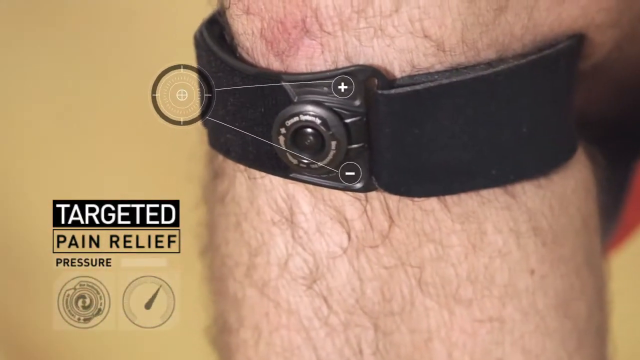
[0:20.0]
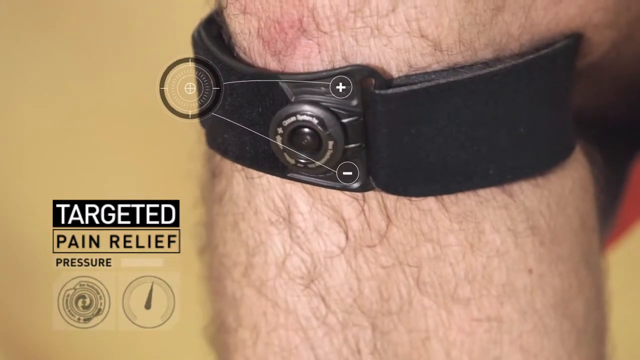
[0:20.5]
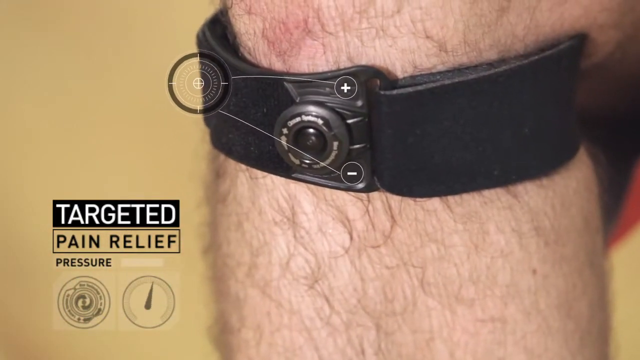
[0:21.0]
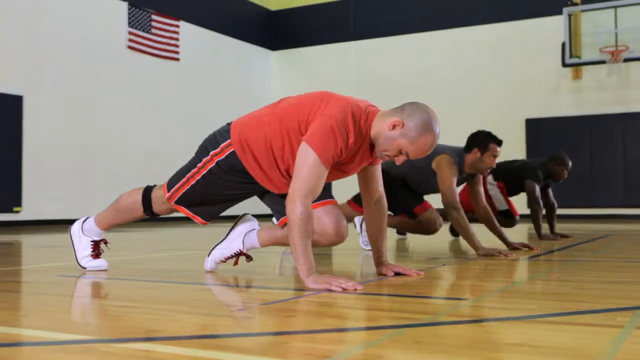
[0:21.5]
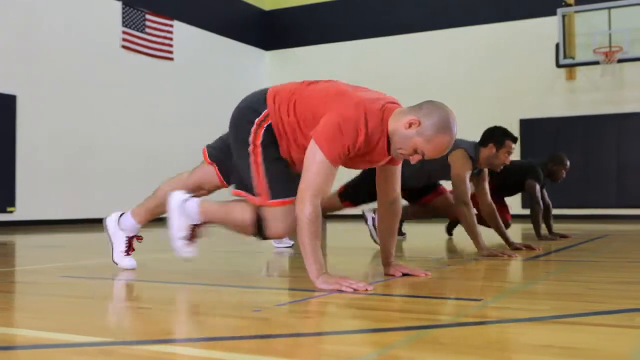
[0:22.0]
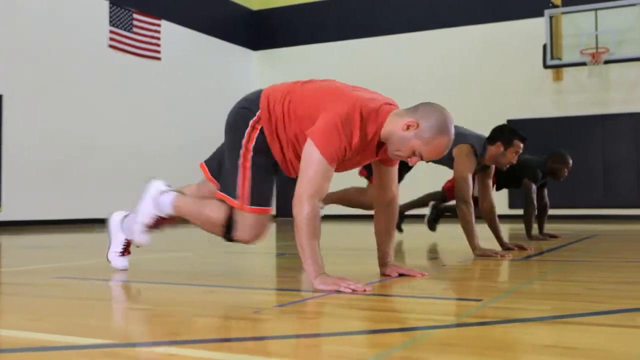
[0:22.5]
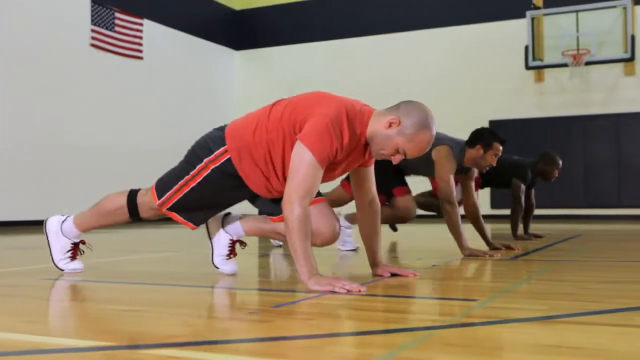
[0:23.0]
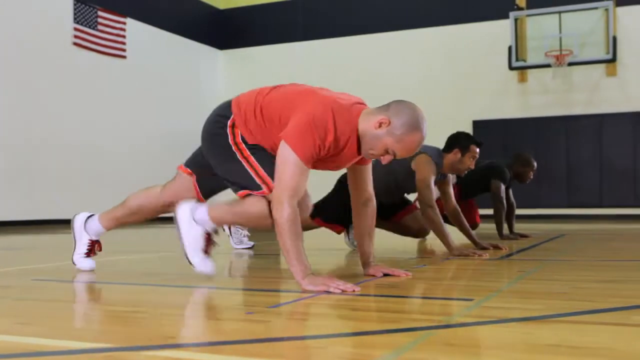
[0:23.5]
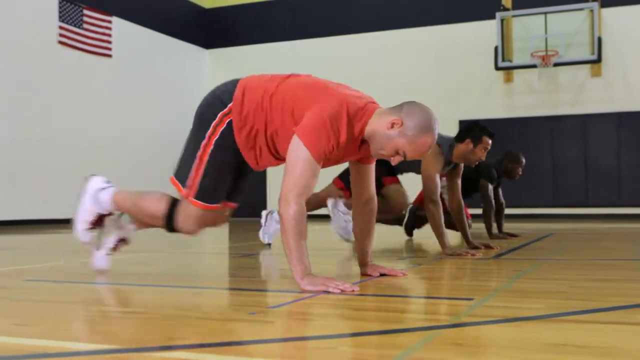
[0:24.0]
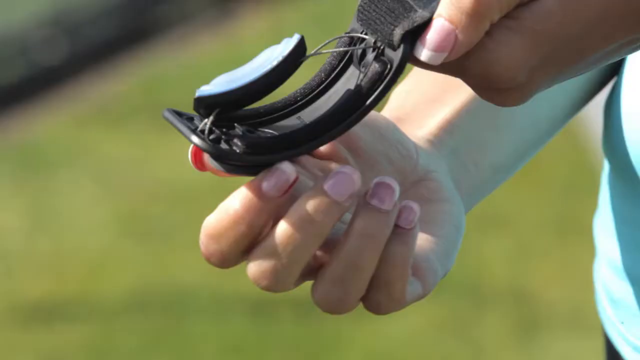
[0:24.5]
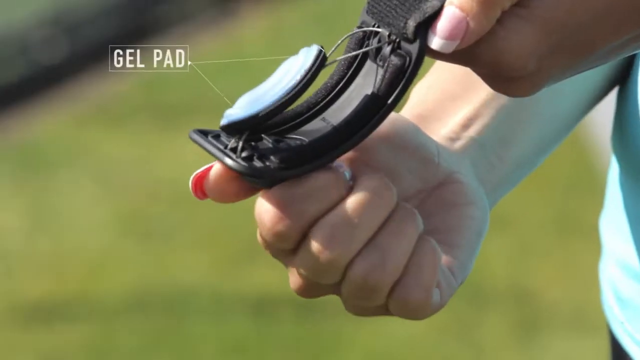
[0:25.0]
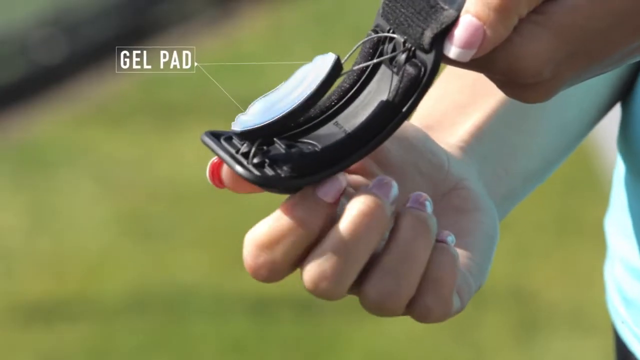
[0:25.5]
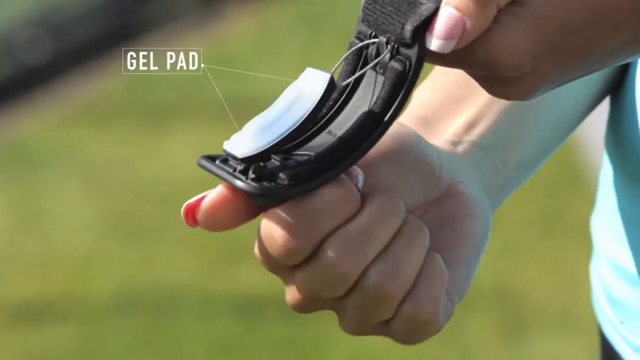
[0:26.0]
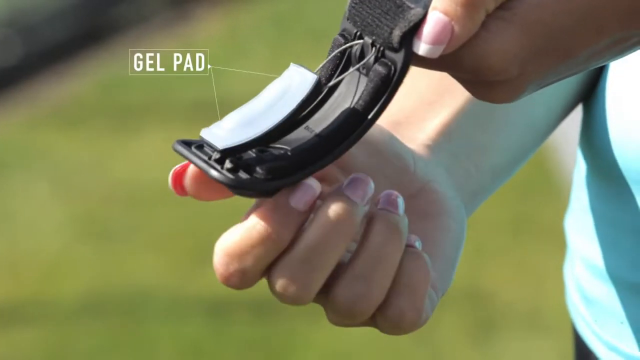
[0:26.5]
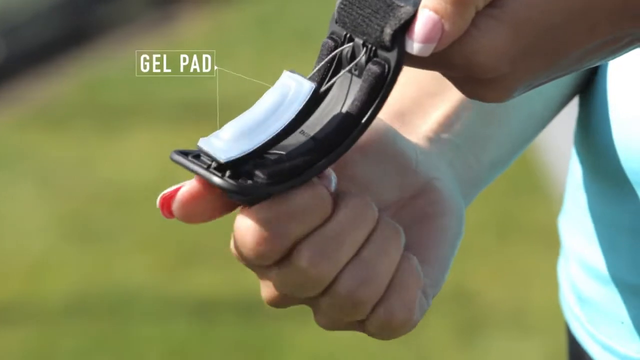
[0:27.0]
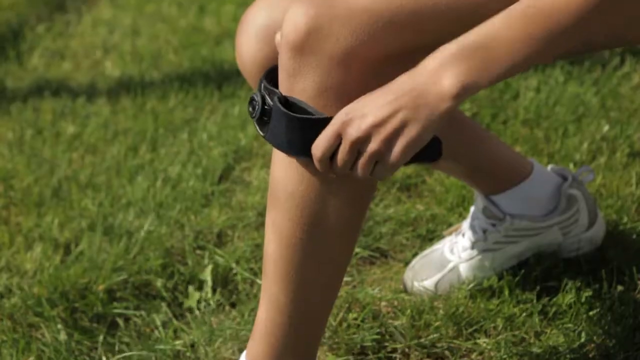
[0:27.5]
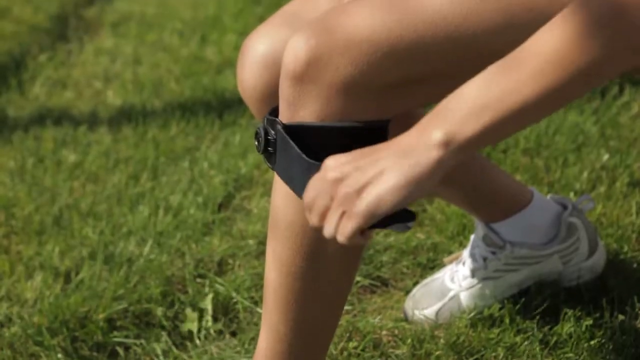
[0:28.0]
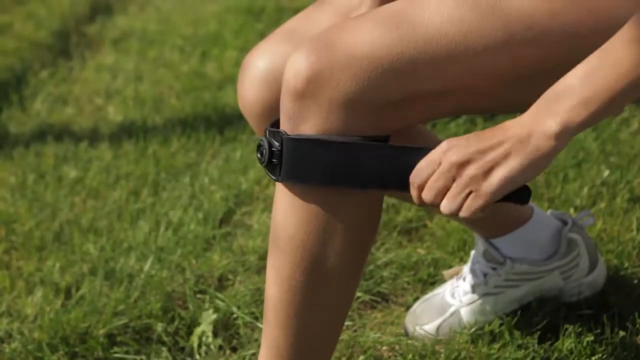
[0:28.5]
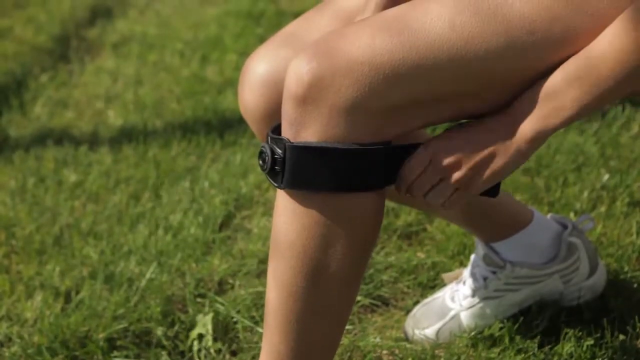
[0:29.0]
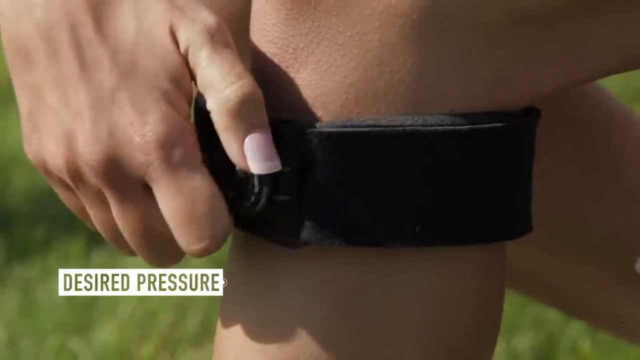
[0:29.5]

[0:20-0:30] Text reads "targeted pain relief" as a band with a knob is shown on somebody's leg, and the knob is being adjusted. People then exercise on a basketball court, and close details of the band are shown: it has a gel pad that can be adjusted, and straps that tighten around the arm or leg. All of the people exercising wear the band around their leg and adjust the pressure.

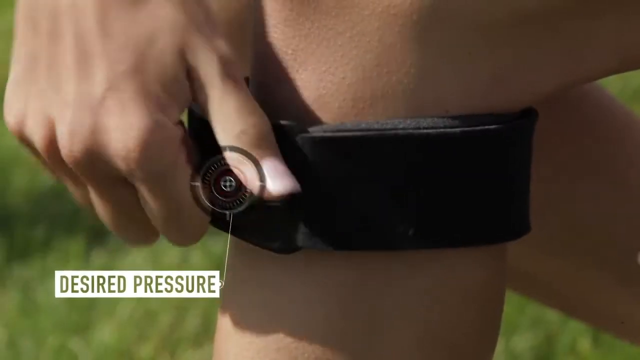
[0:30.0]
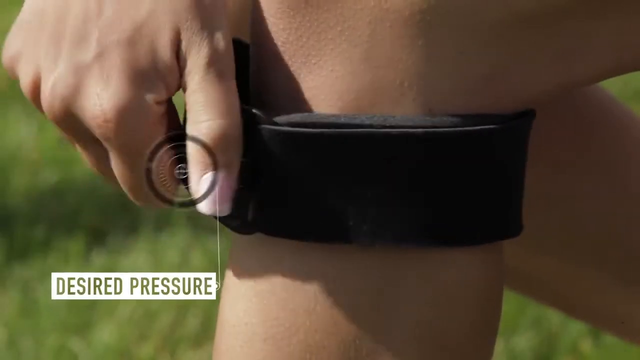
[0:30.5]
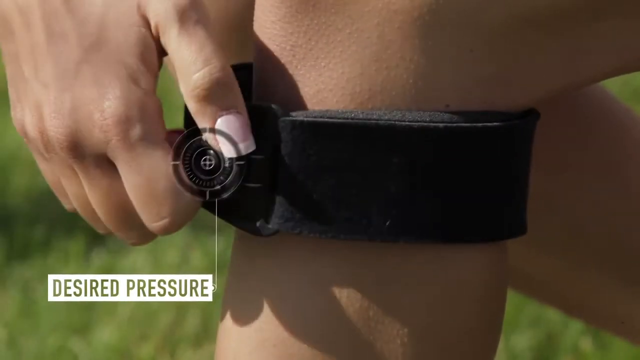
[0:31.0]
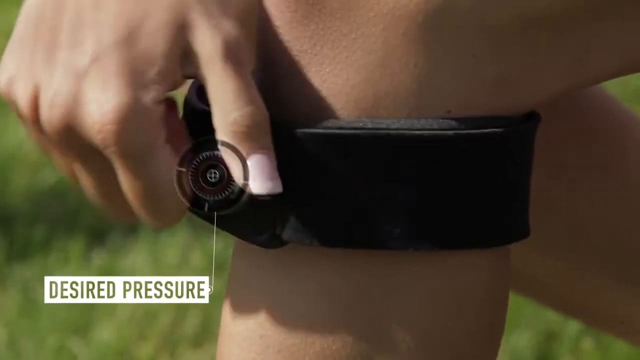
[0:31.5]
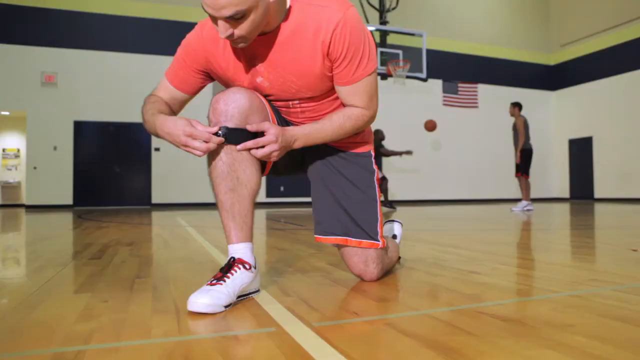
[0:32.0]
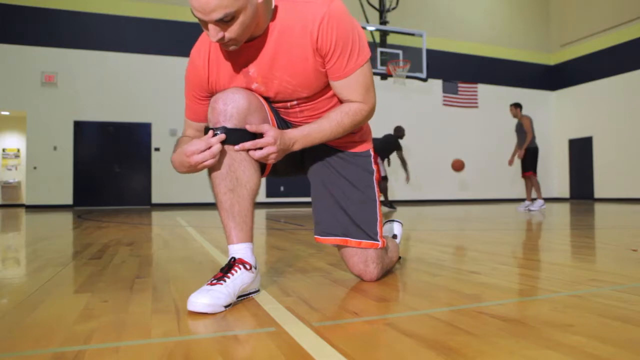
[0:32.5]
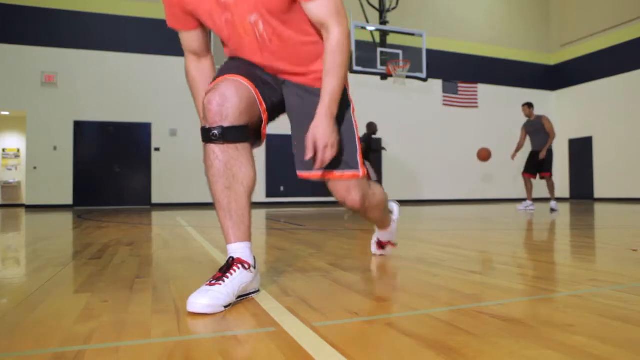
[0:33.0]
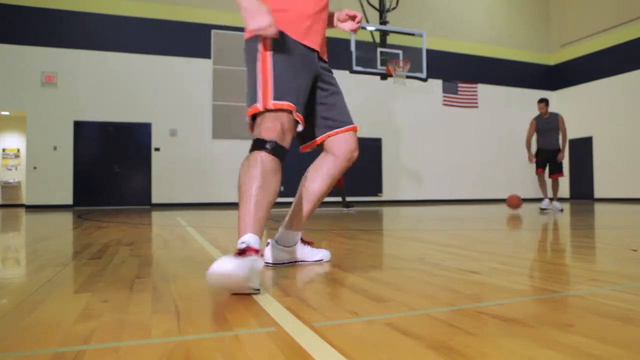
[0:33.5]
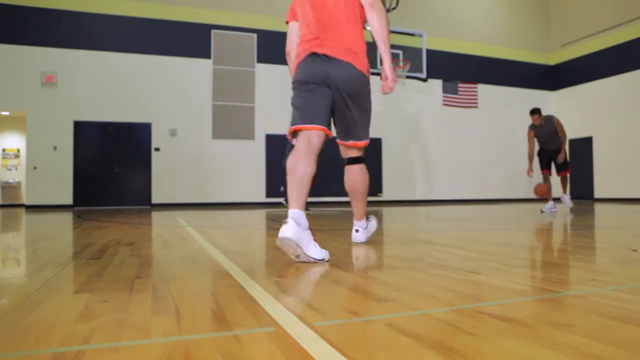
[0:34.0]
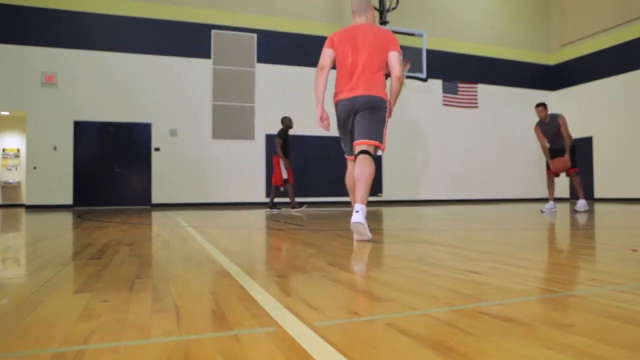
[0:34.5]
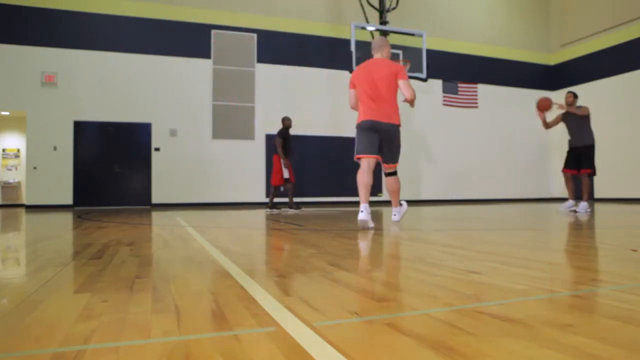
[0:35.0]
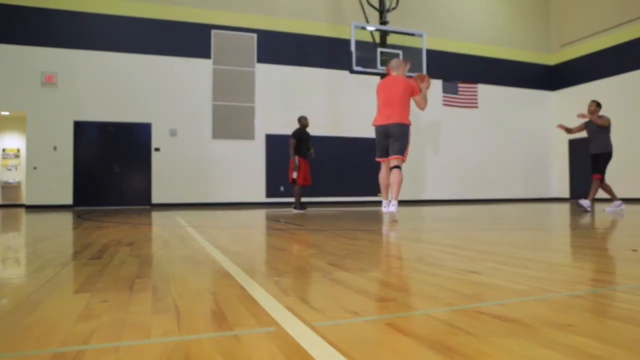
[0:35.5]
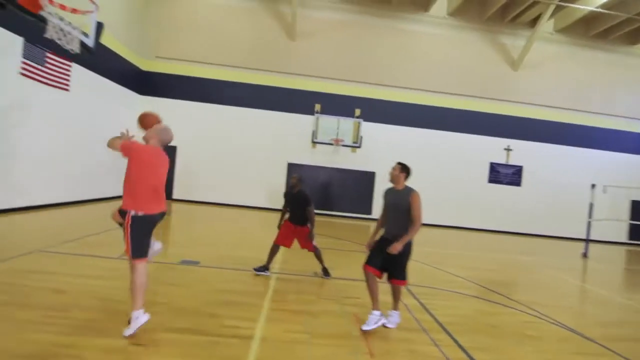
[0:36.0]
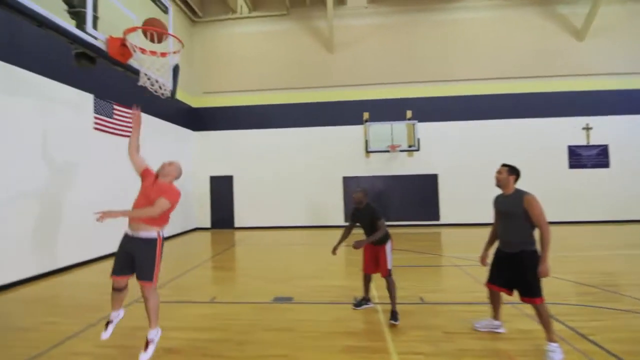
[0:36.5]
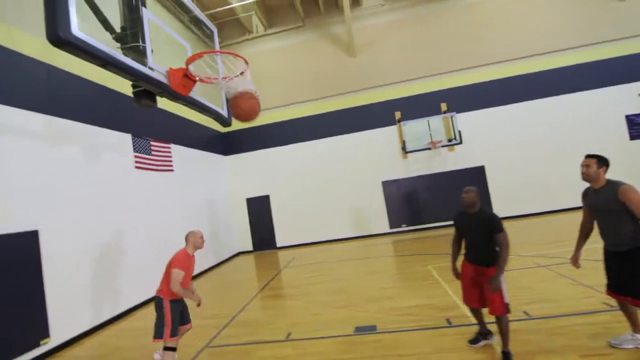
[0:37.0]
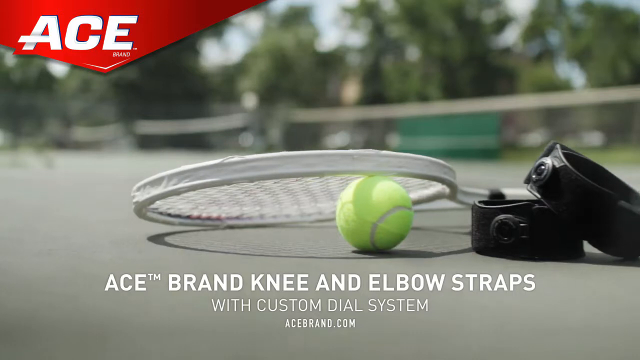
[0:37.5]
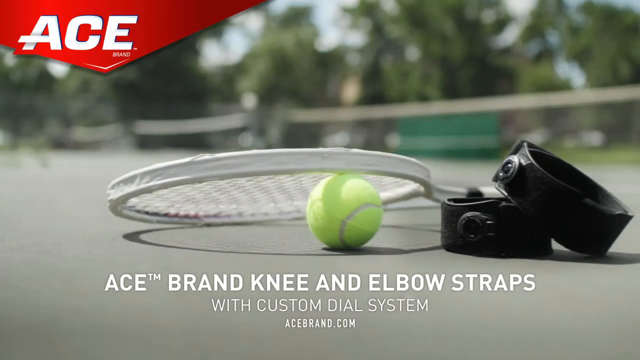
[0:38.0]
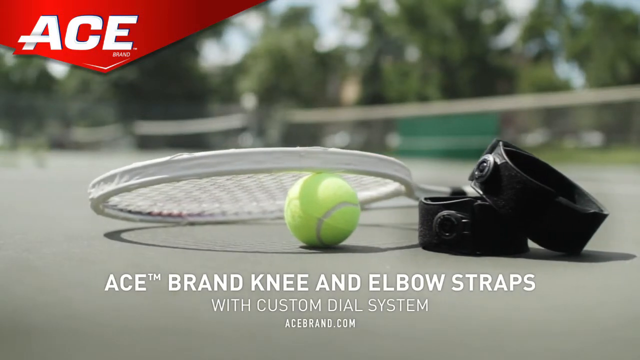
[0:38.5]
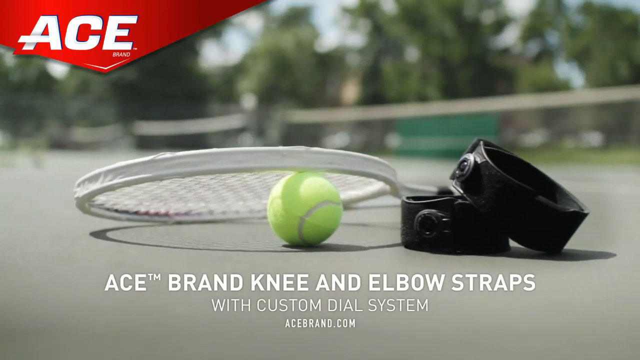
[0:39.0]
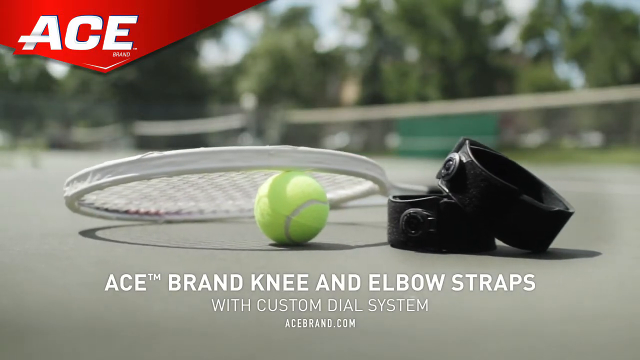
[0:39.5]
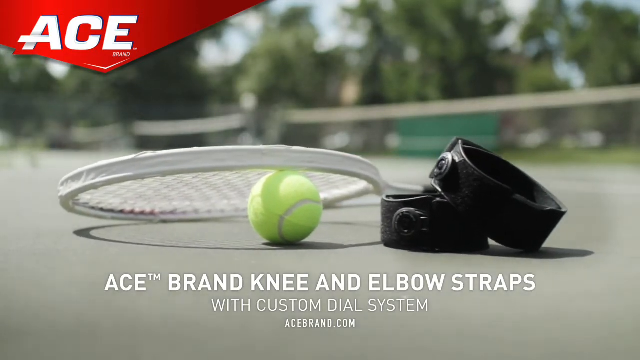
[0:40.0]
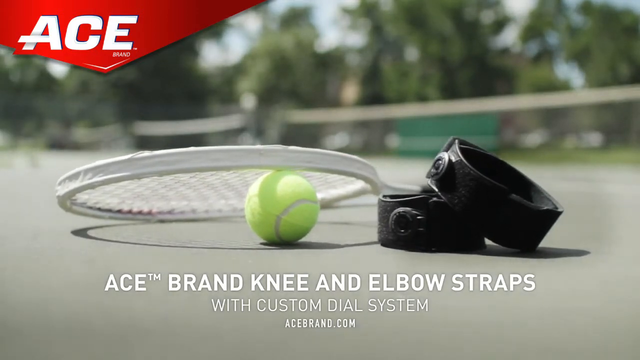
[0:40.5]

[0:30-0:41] On a basketball court, somebody wearing the band on their right leg bends down and tightens, or turns, the knob. They then resume their basketball game with two friends in the background. The guy with the band shoots at the hoop, and the ball goes in. An American flag is in the background of the court. At the end, text reads "ACE Brand Knee and Elbow Straps with Custom Dial System."